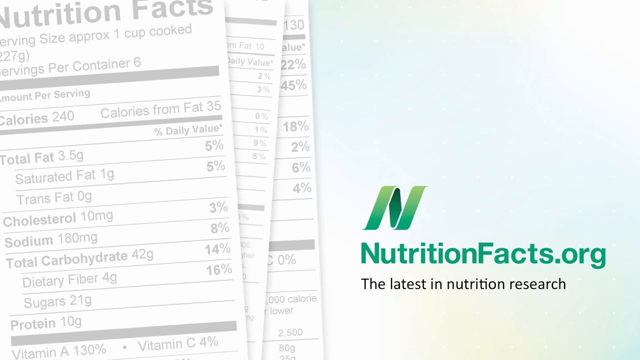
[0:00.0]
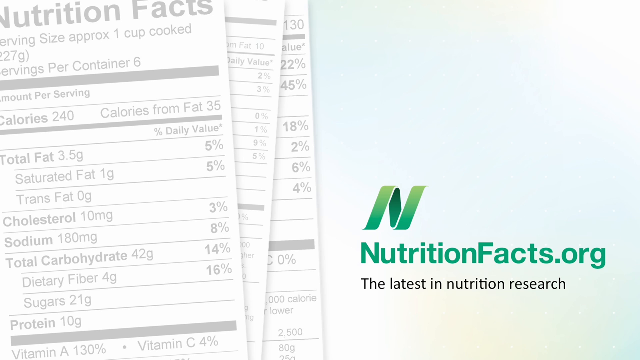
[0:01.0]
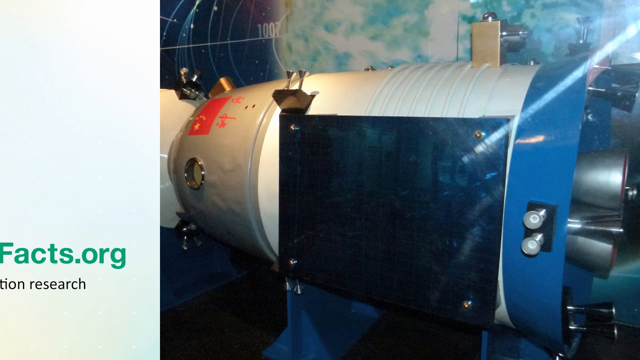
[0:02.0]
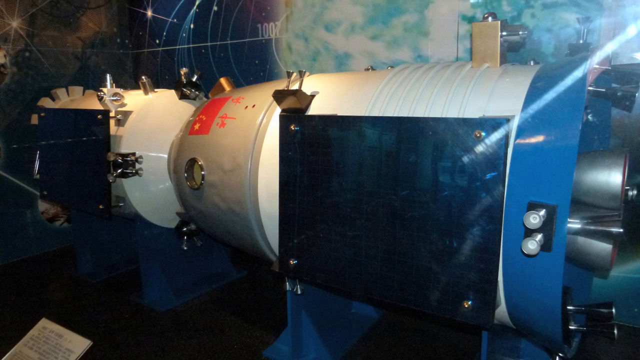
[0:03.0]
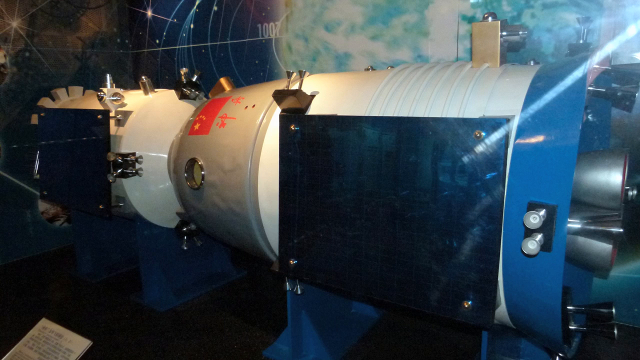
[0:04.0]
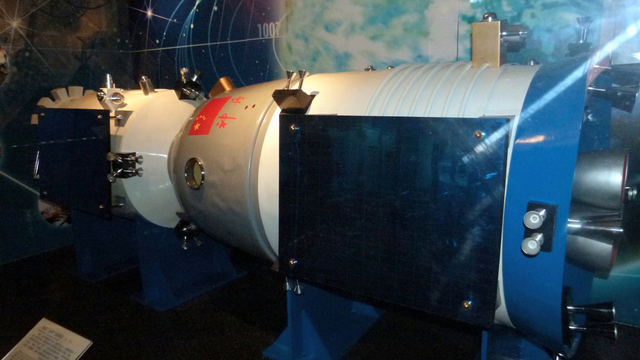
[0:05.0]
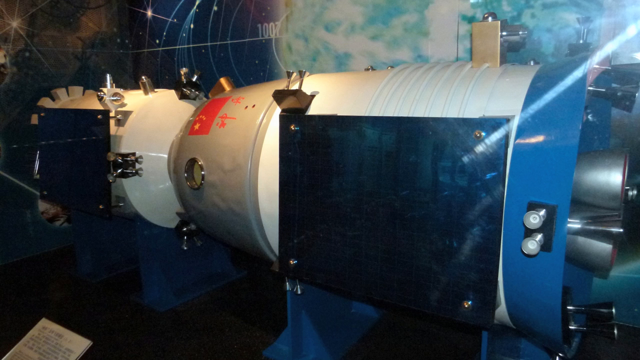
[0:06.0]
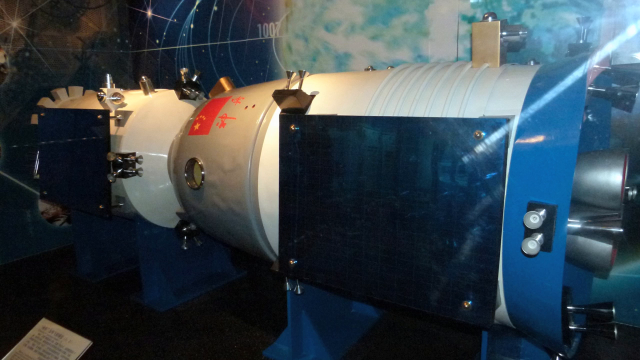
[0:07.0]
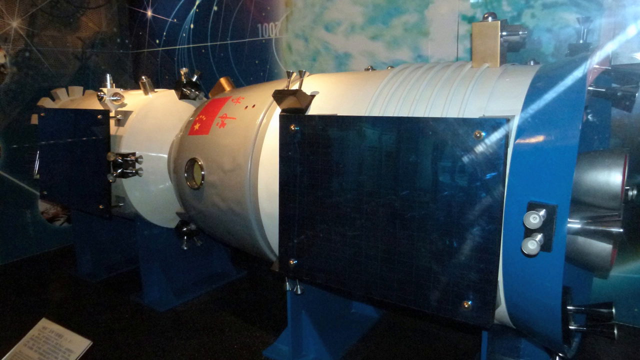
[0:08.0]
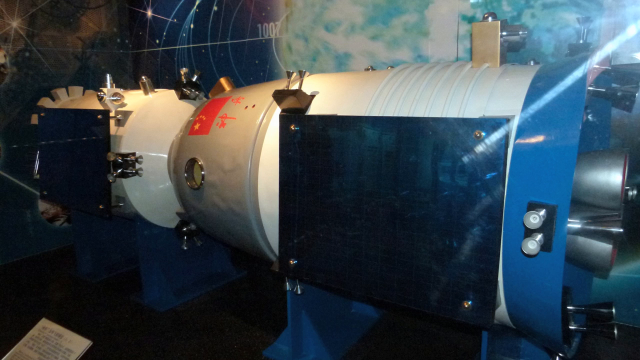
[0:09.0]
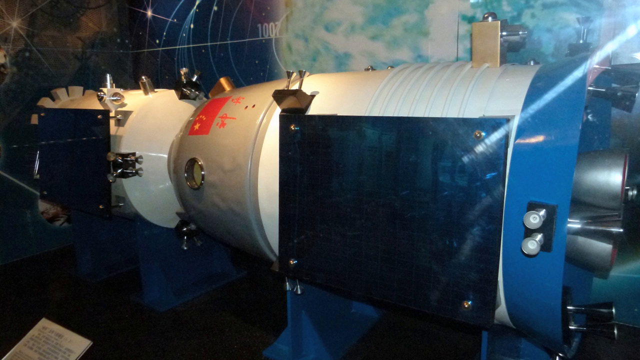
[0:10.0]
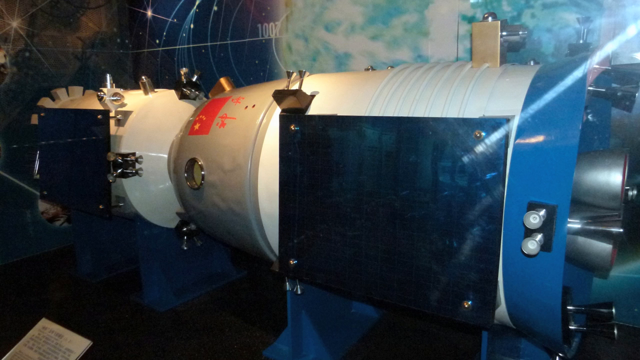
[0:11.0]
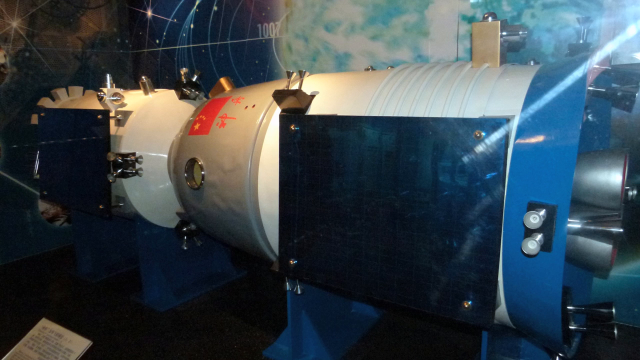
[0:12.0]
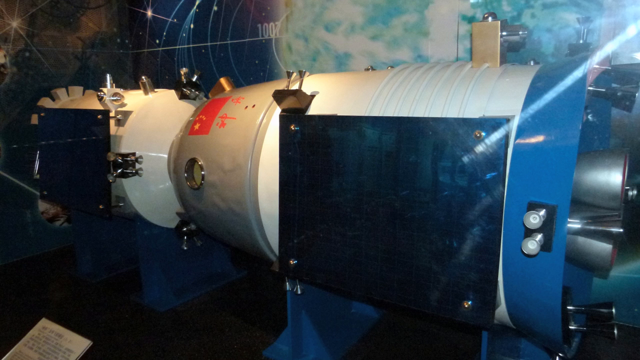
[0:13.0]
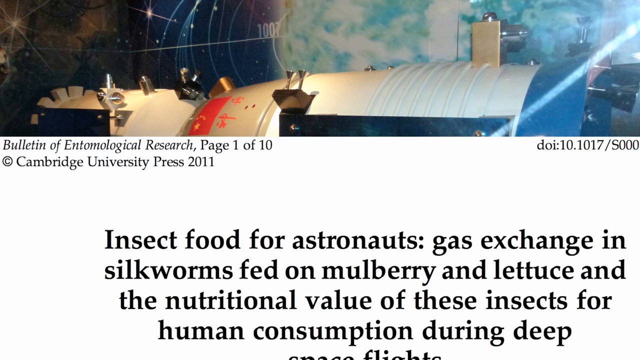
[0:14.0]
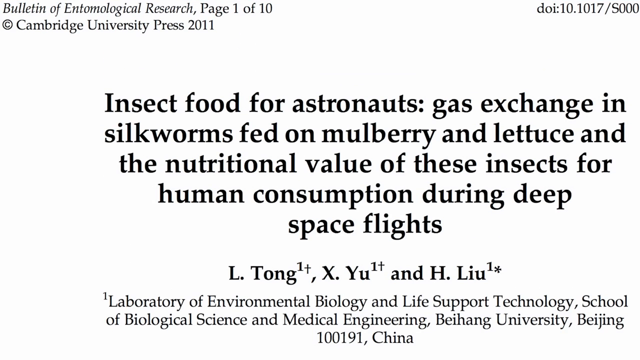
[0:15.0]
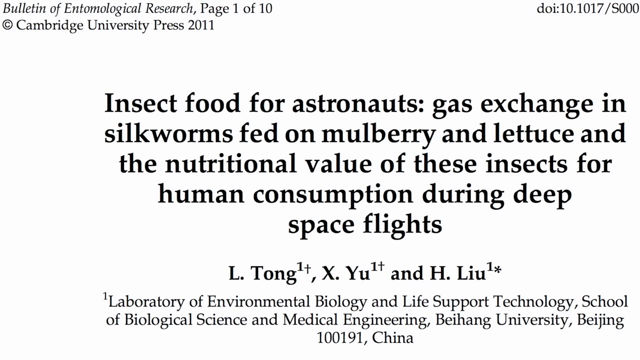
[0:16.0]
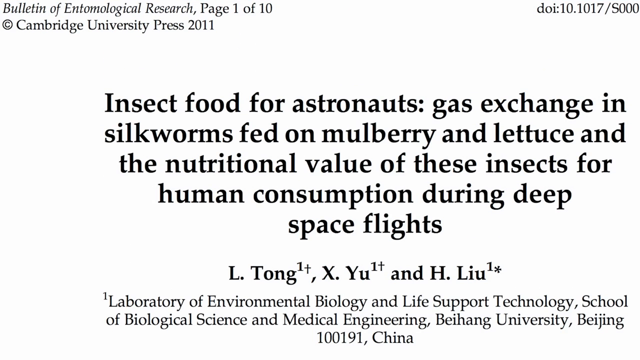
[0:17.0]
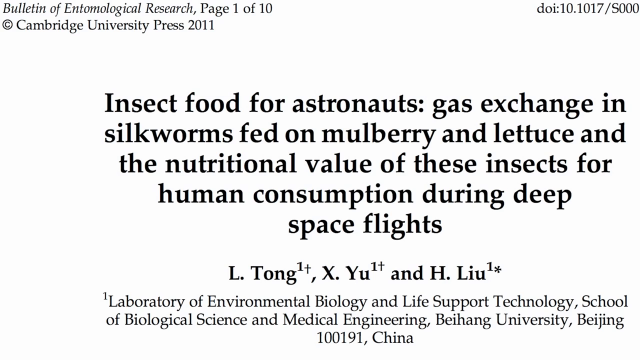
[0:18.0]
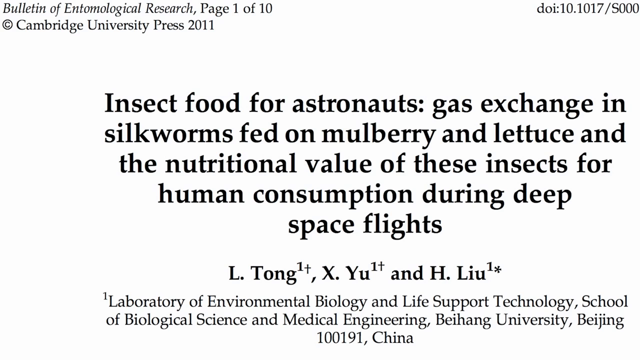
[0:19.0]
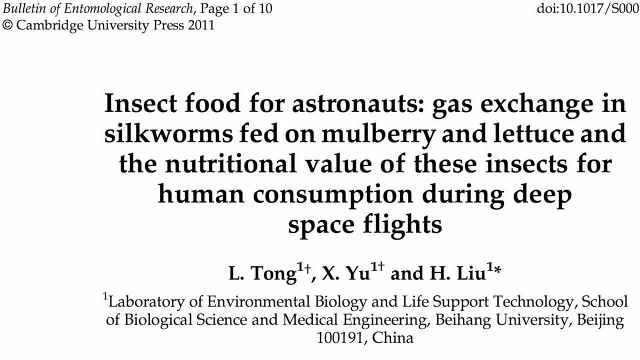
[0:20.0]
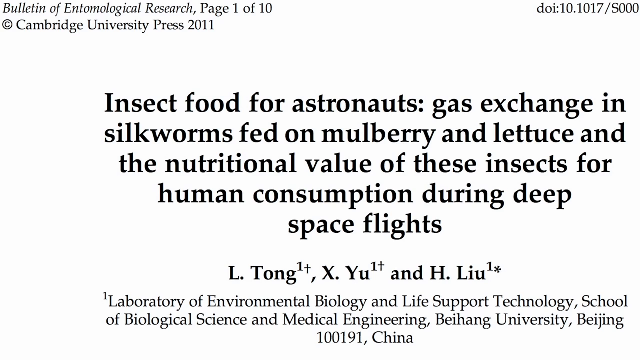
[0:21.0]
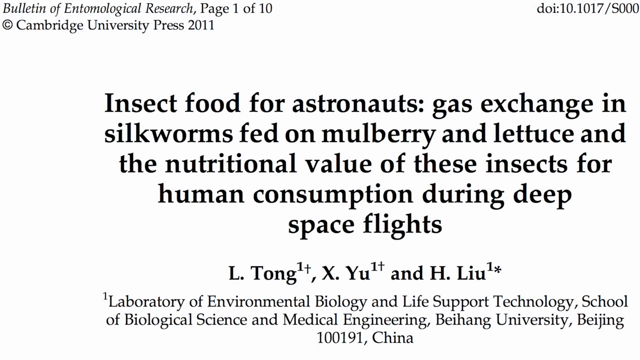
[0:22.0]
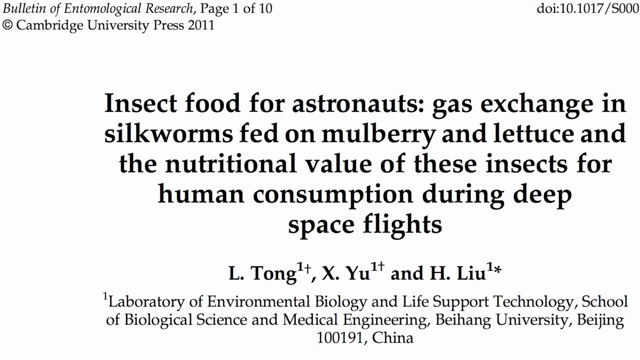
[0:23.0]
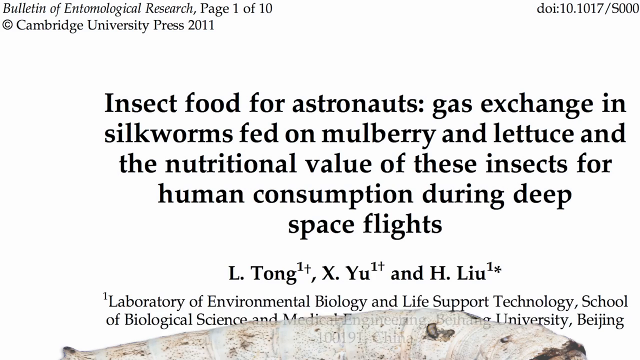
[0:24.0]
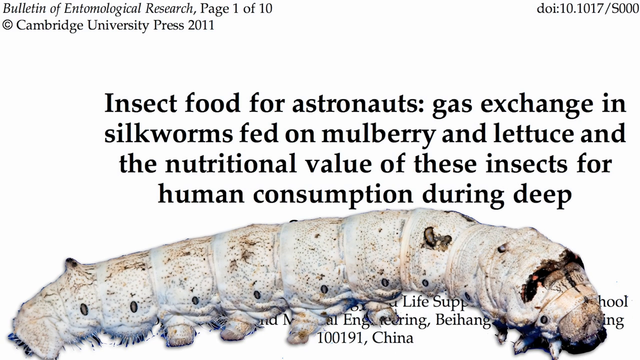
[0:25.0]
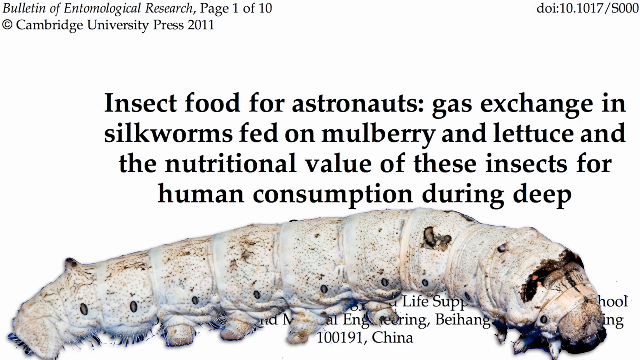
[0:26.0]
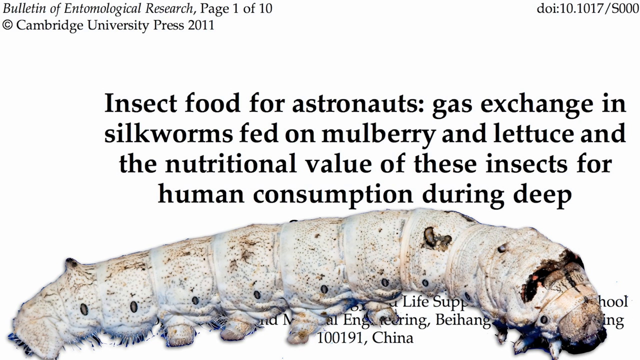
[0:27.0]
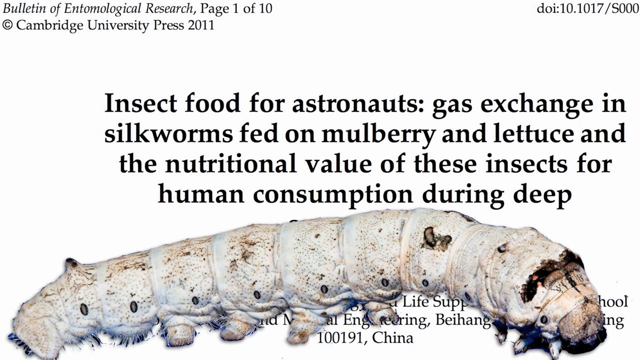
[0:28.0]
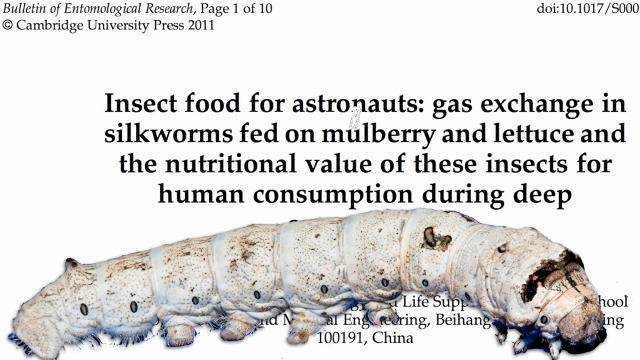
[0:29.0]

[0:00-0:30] The video is about Nutrition Facts. On the left side are Nutrition Facts panels like a label on a product, with two more to the right of the first one, barely coming out from under it; the background on the right side is light blue. In the bottom right corner is a green N, with "nutritionfacts.org" below it and, in black below that, "the latest in nutrition research." The view swipes to the left to a big piece of machinery in the center. It is white on the left side, gray in the center, then white with a blue rim on the right side, and little gray things that look almost like light bulb covers stick out from under it. What looks kind of like a galaxy poster is on the wall behind it. On the left side, in front of it, a small dark blue square is bolted to it, and in the back part where the white is, a big black rectangle is bolted to it. A white background with text then scrolls up from the bottom. In the top left corner is information reading "bulletin of entomology research," "page 1 of 10," and below that "Cambridge University Press, 2011." A small line of information is in the top right corner, there is a big paragraph in bold black letters, and more black text in smaller letters runs across the bottom. Something like a grub worm then comes up from the bottom, white and stretching all the way across from left to right, with little black circles down its sides. Its head is on the right side and is white with a little brownish-yellow coloring.